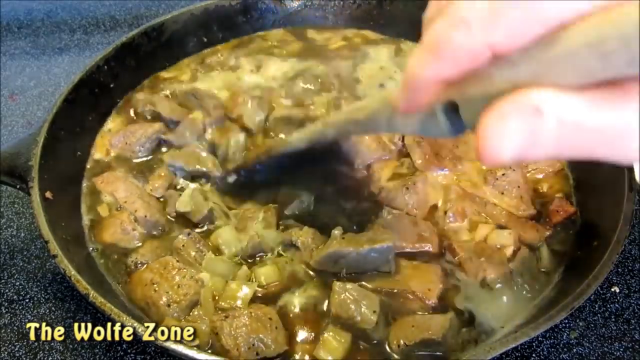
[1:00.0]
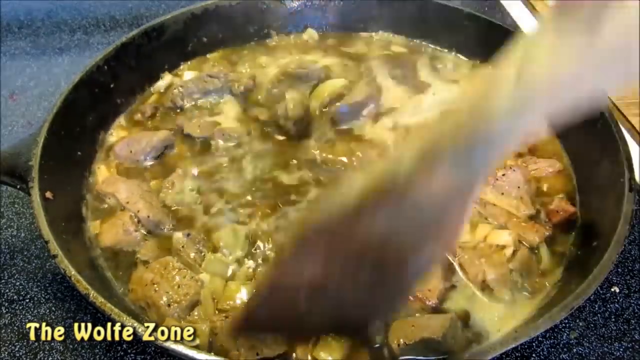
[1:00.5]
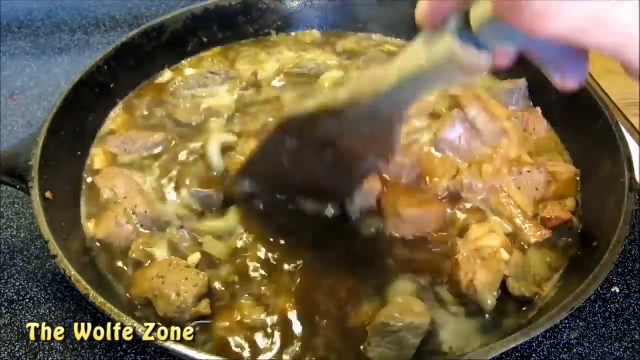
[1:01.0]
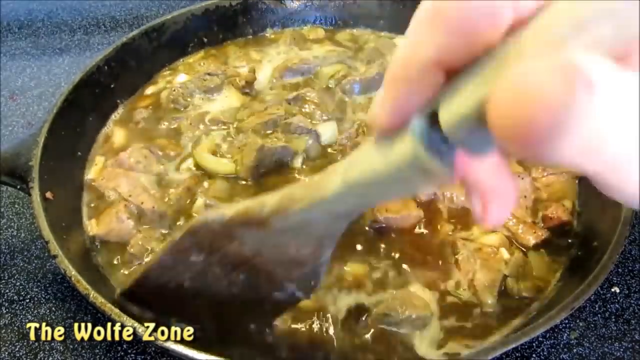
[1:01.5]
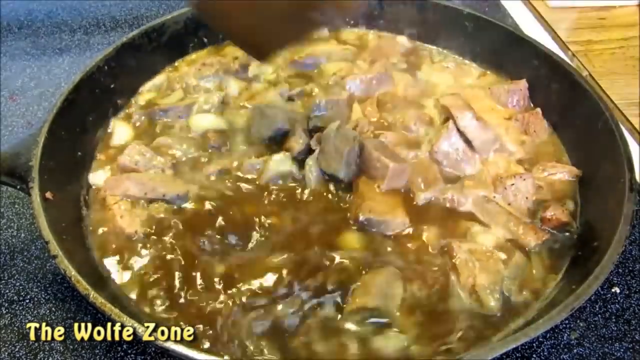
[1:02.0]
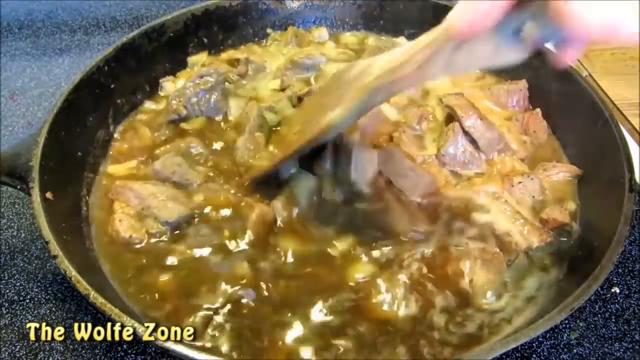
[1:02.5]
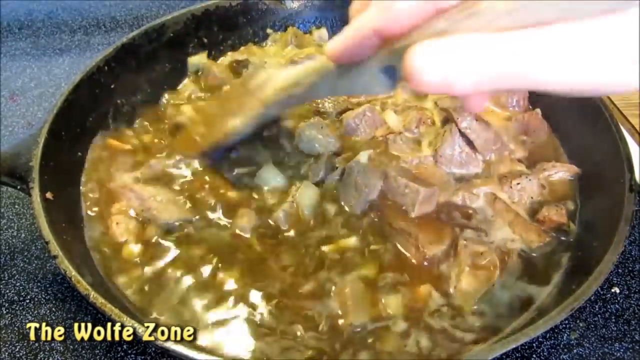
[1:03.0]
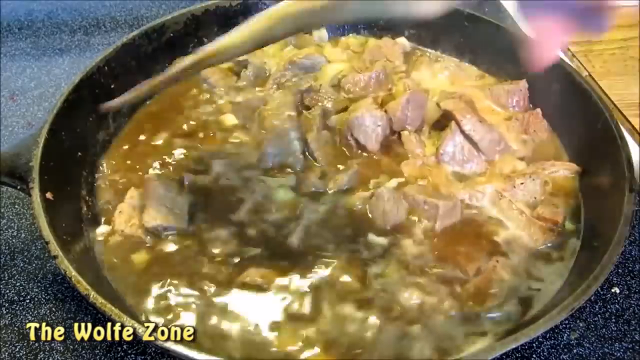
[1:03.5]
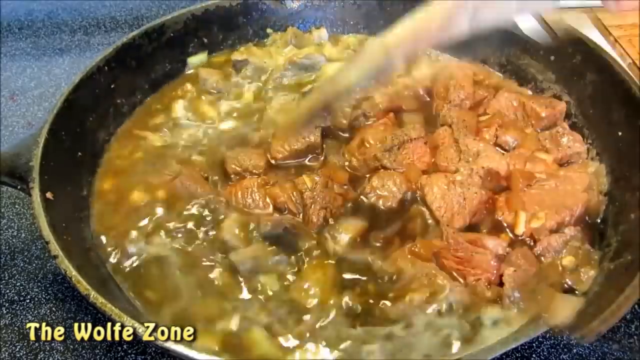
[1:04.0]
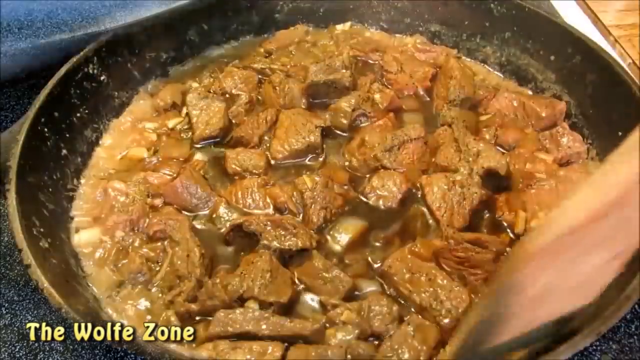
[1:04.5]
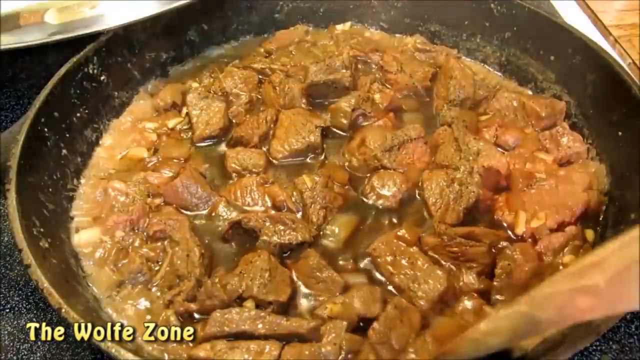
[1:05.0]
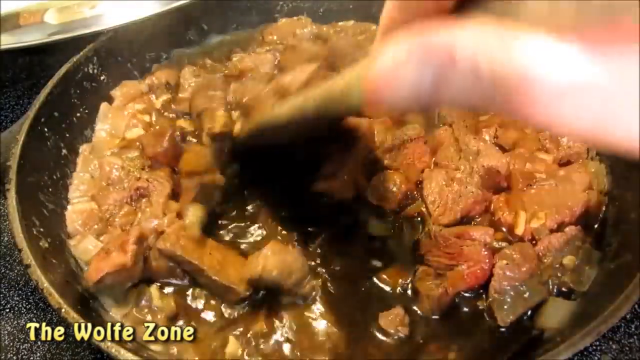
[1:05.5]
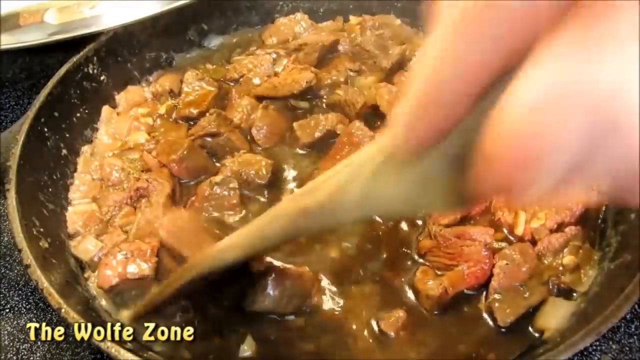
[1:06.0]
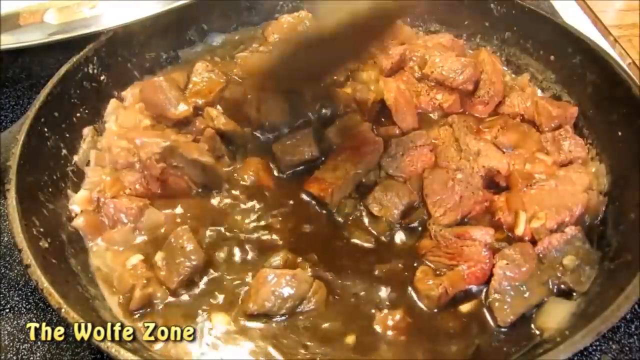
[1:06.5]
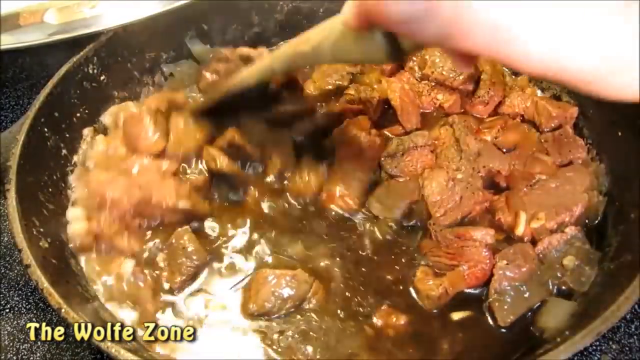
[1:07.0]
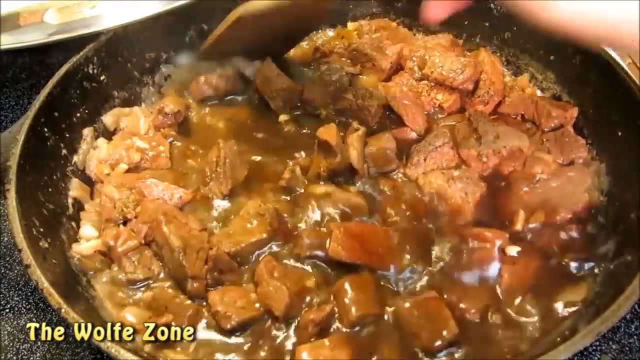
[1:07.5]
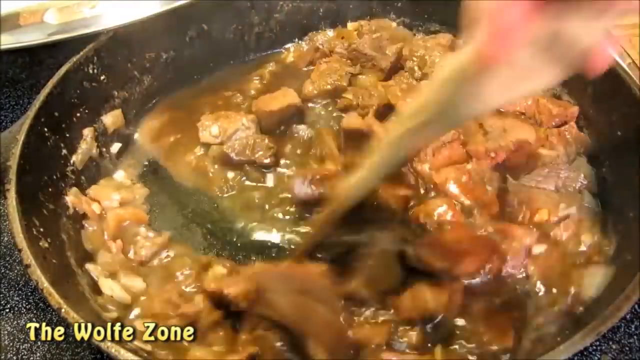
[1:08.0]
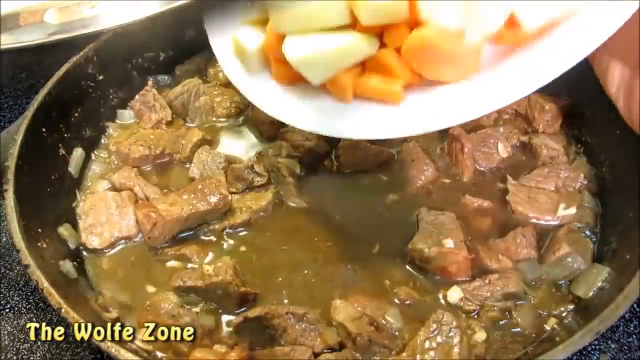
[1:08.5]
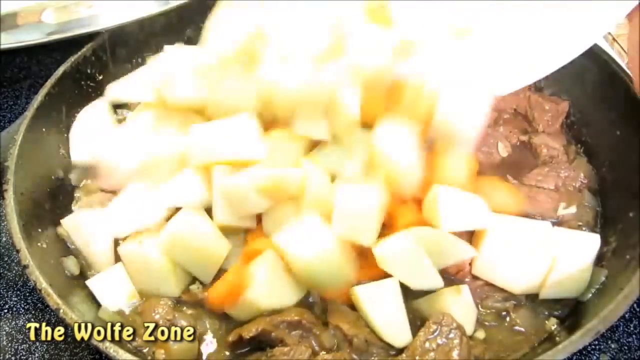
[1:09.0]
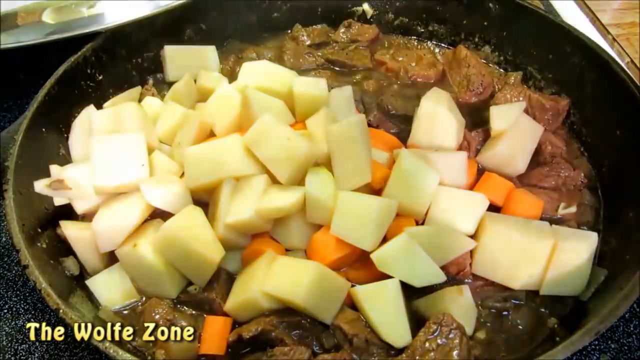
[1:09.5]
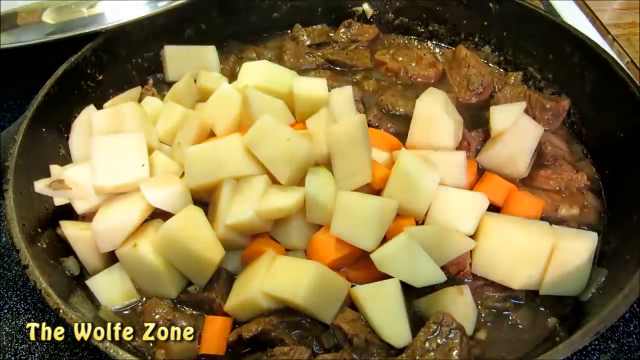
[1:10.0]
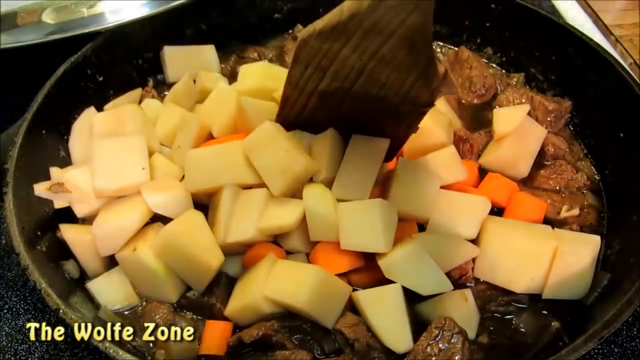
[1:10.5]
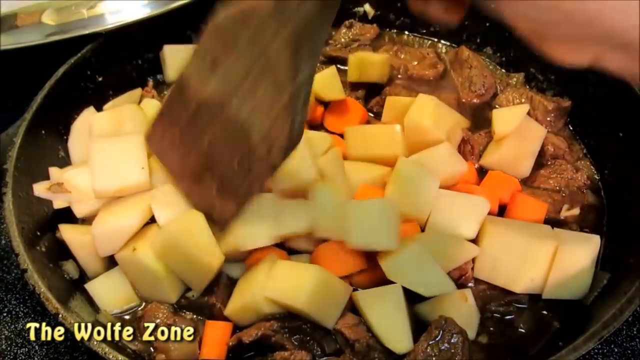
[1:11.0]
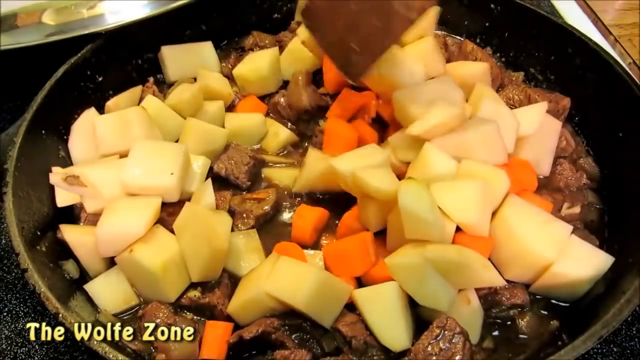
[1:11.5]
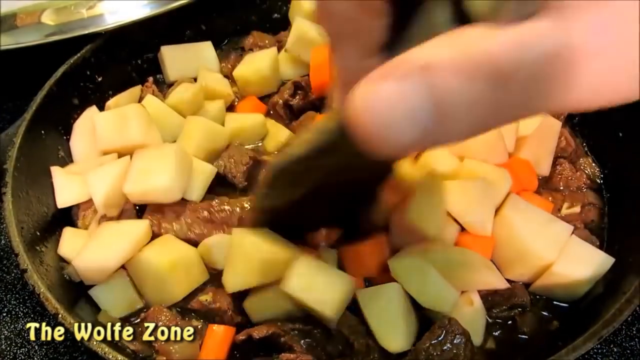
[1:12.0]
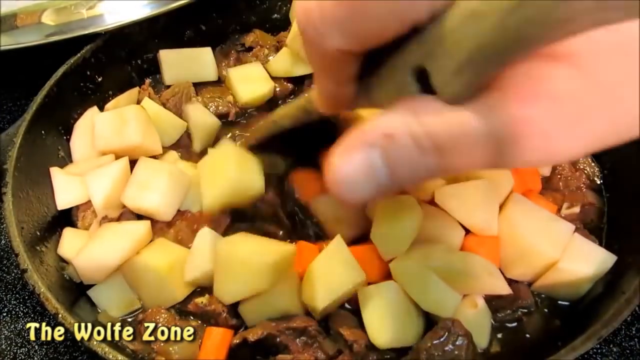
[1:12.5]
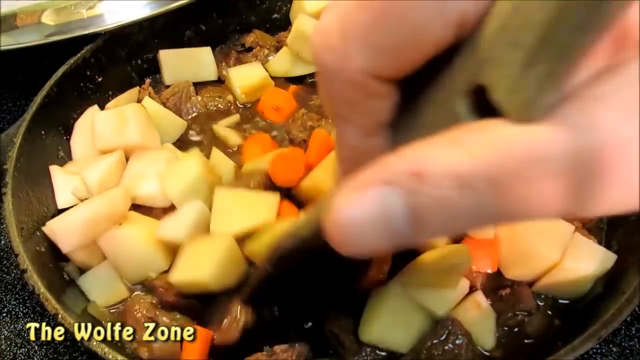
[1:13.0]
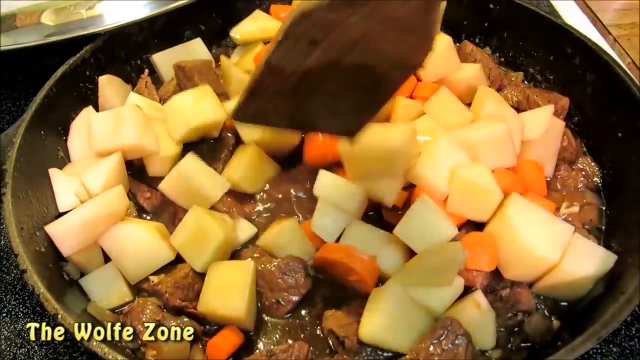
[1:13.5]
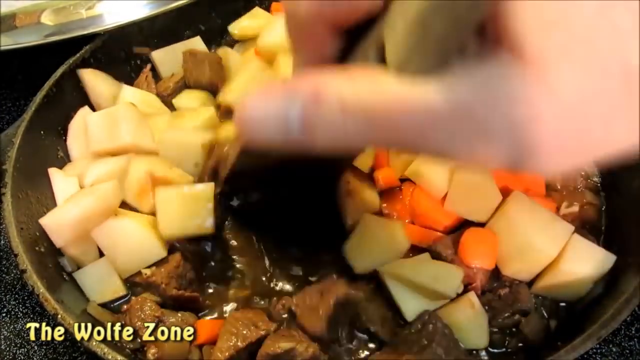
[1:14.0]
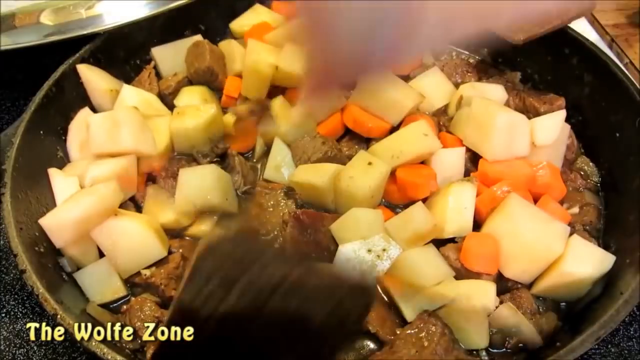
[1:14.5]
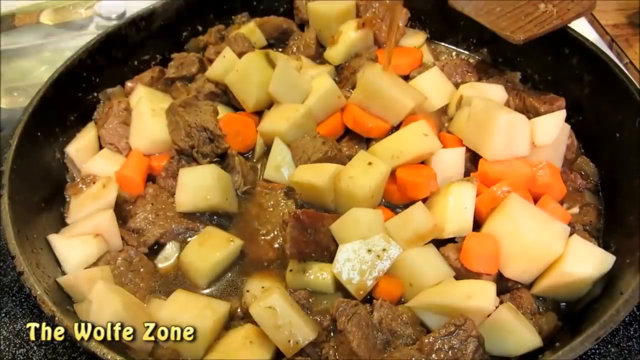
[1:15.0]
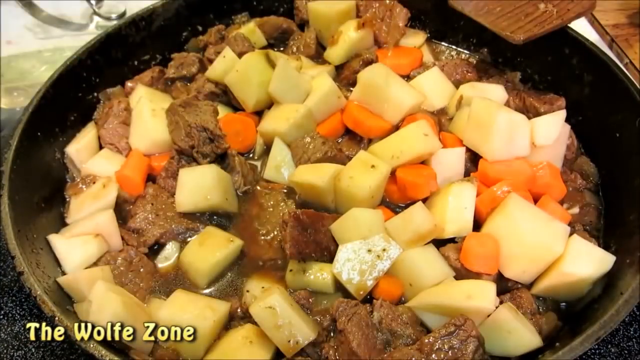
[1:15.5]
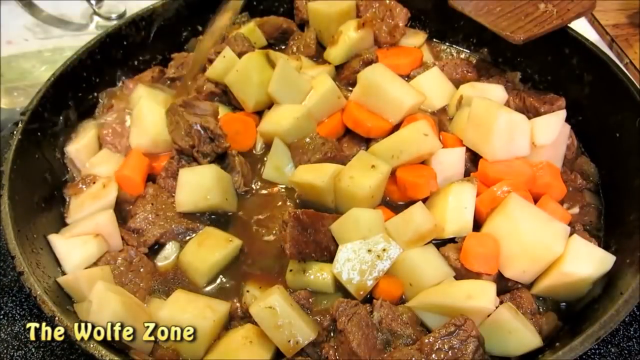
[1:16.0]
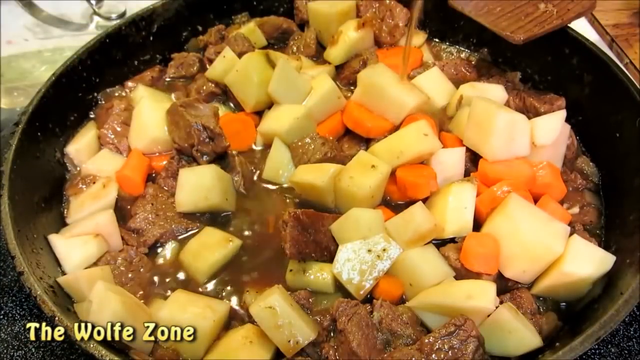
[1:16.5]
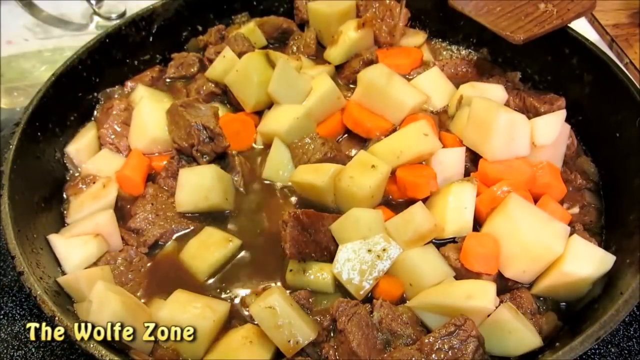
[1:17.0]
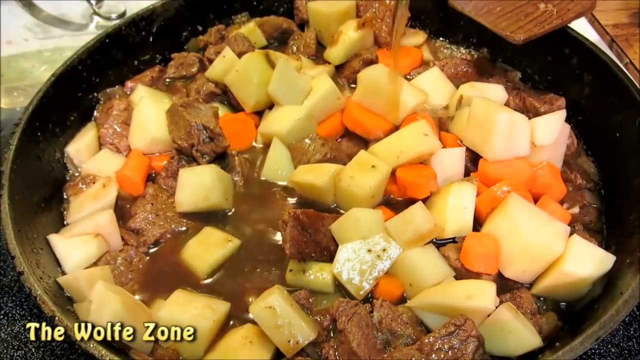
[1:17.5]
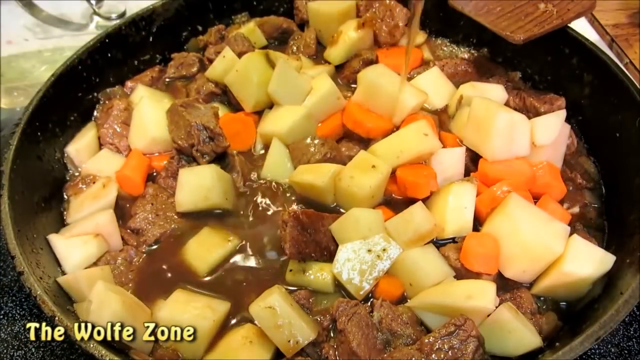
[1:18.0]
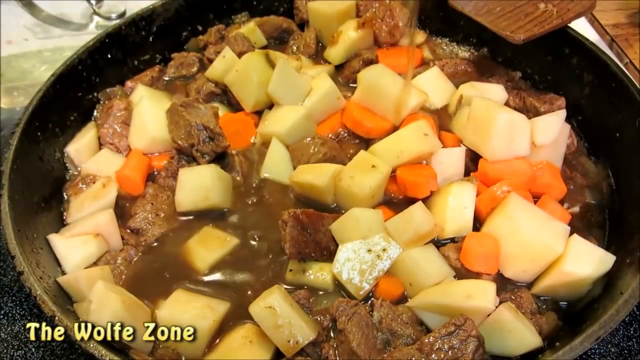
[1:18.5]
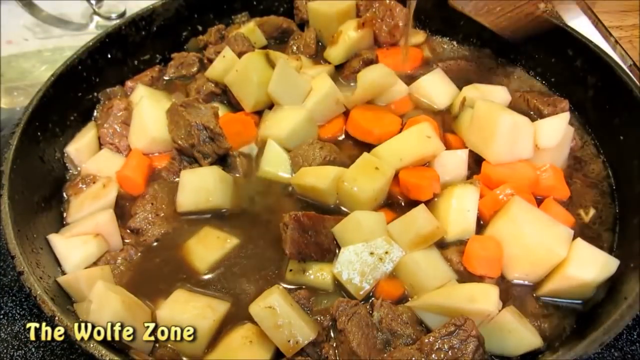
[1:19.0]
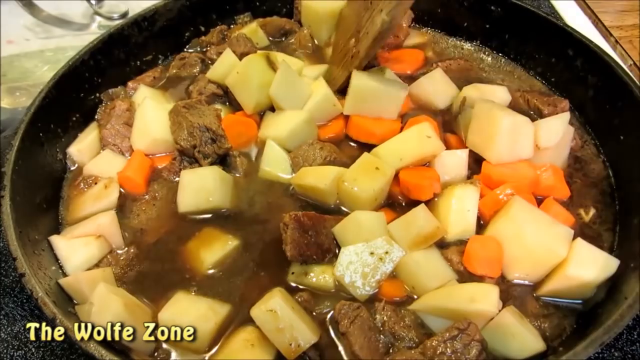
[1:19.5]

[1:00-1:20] The man gives the mixture of meat, onions, stock and Coca-Cola a good stir. He adds diced carrots along with potatoes and seems to add a little more stock as he stirs. There looks to be good caramelization in the pan, and he appears to be making a hearty stew from raw ingredients. His channel is called The Wolf Zone.